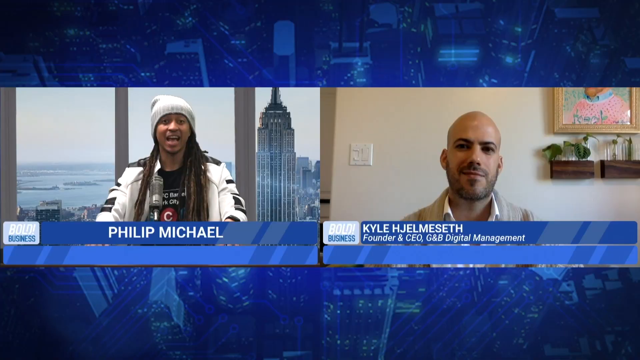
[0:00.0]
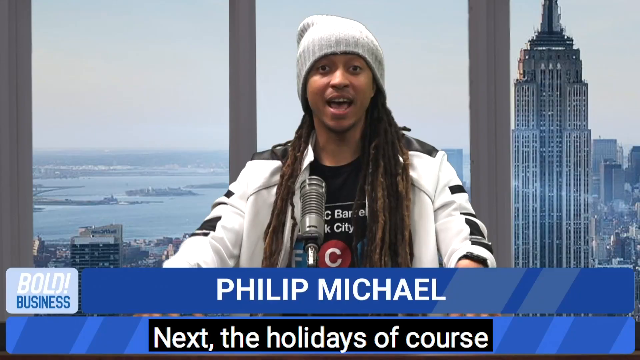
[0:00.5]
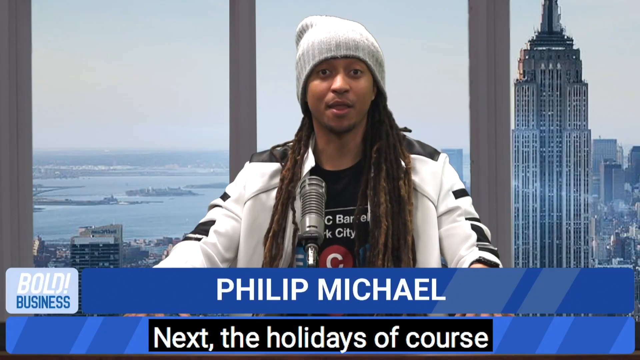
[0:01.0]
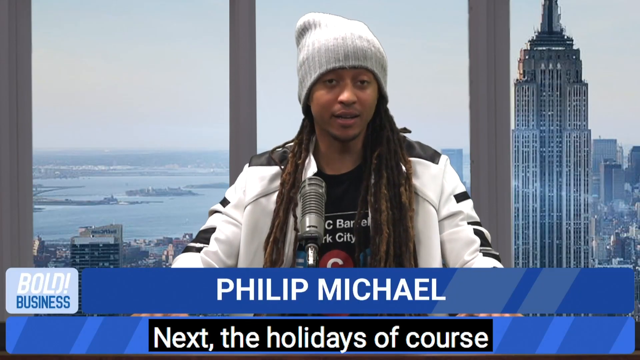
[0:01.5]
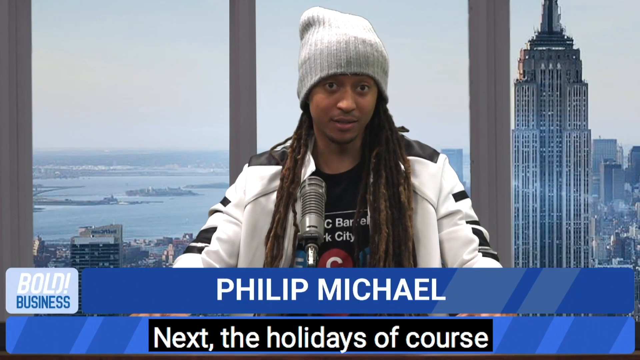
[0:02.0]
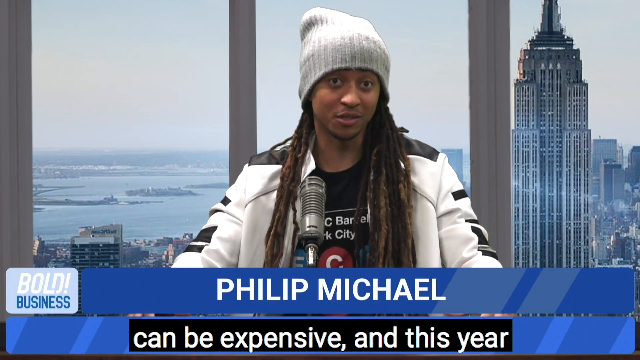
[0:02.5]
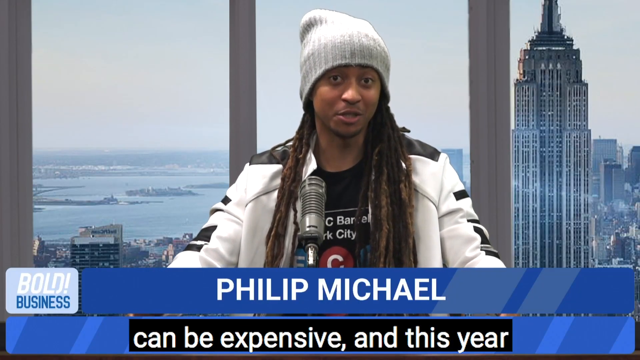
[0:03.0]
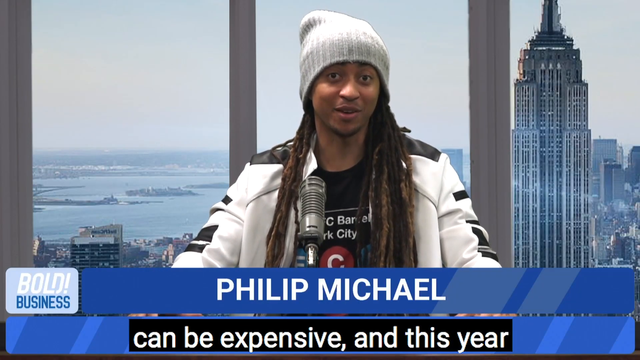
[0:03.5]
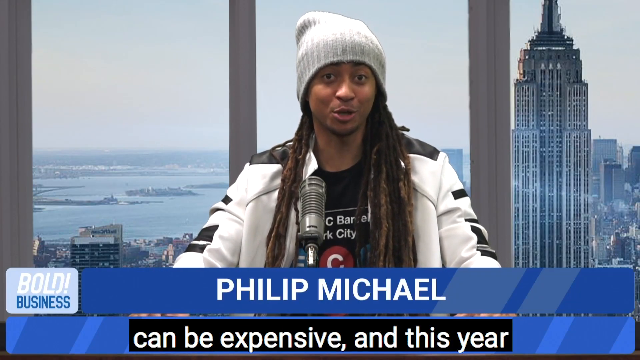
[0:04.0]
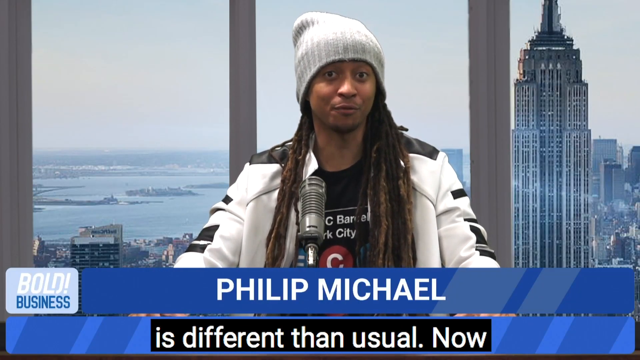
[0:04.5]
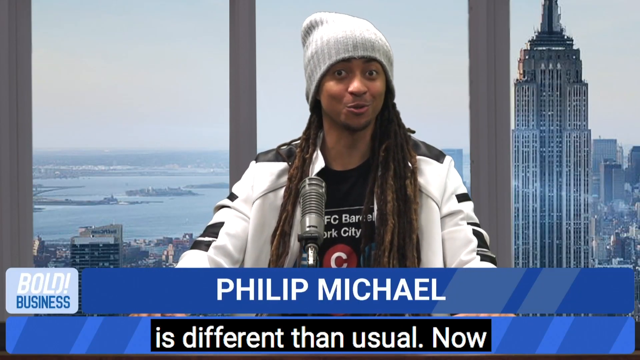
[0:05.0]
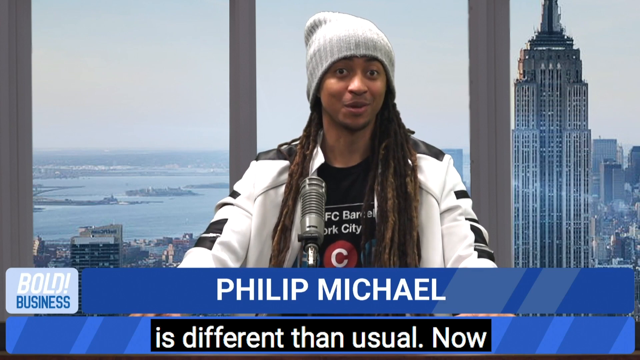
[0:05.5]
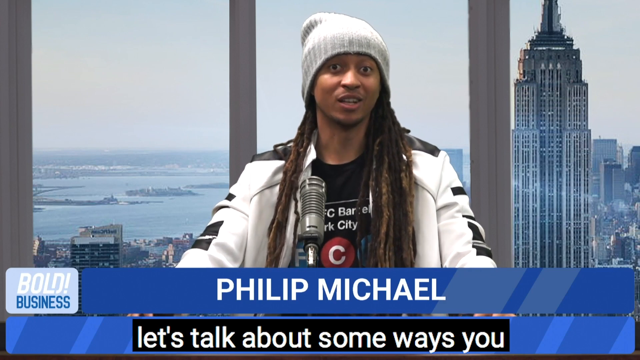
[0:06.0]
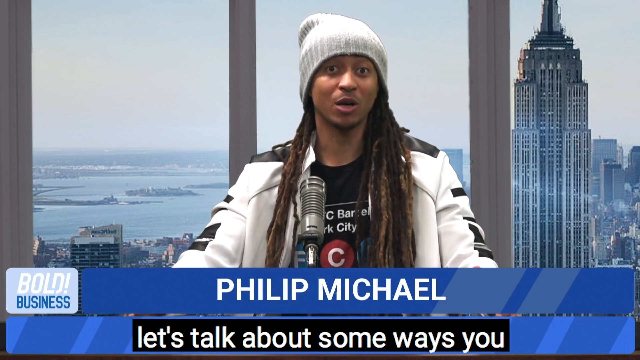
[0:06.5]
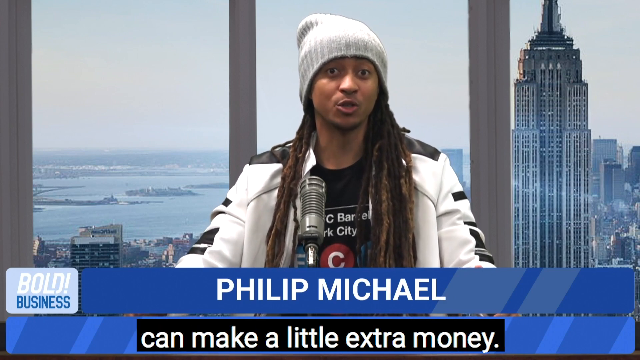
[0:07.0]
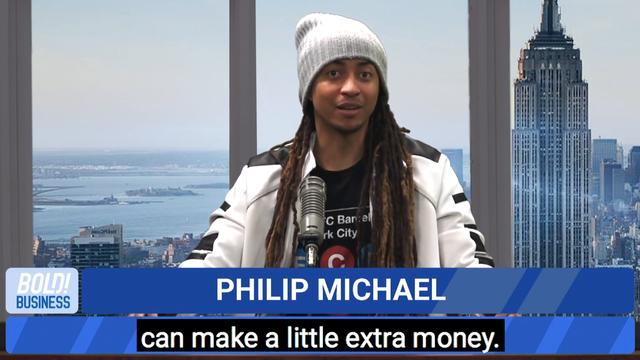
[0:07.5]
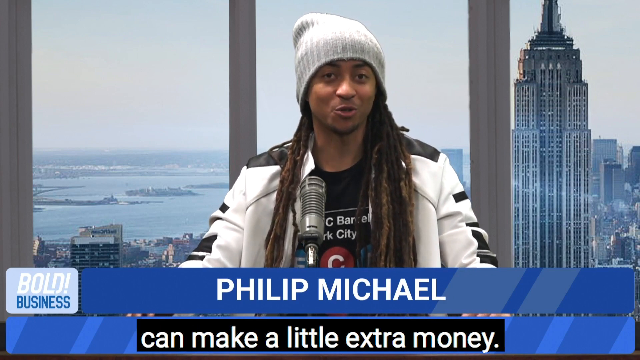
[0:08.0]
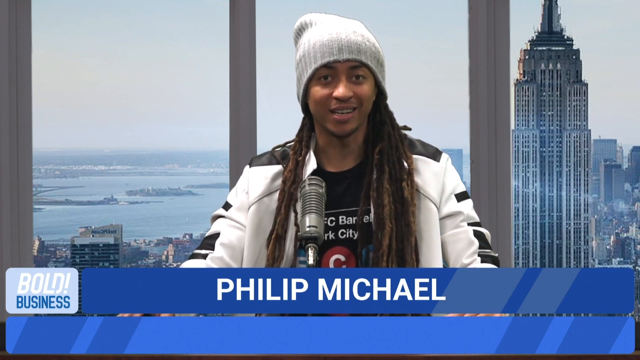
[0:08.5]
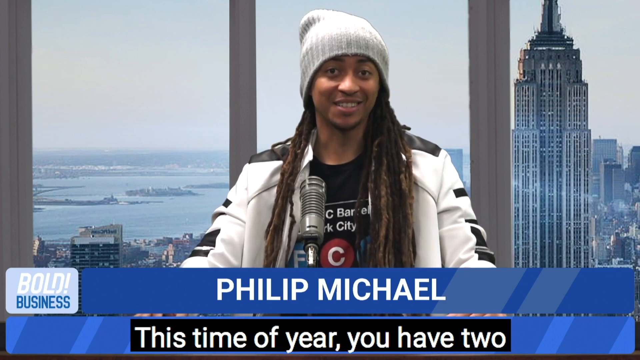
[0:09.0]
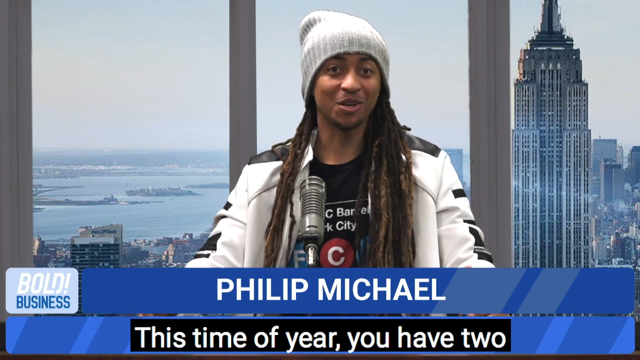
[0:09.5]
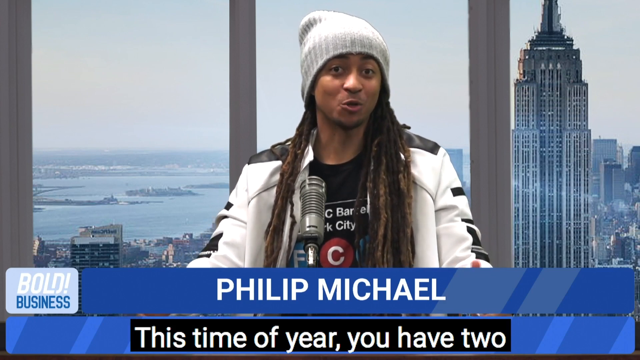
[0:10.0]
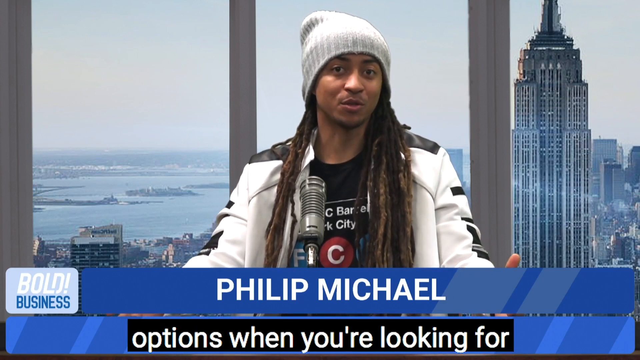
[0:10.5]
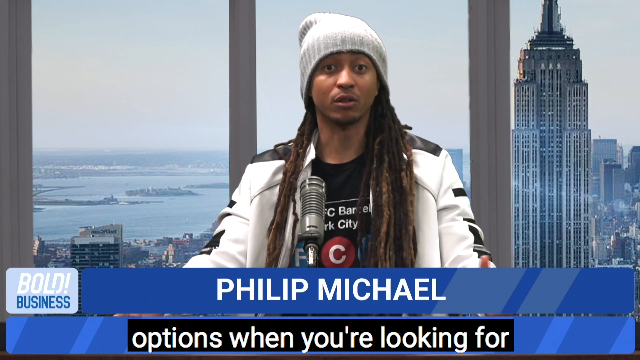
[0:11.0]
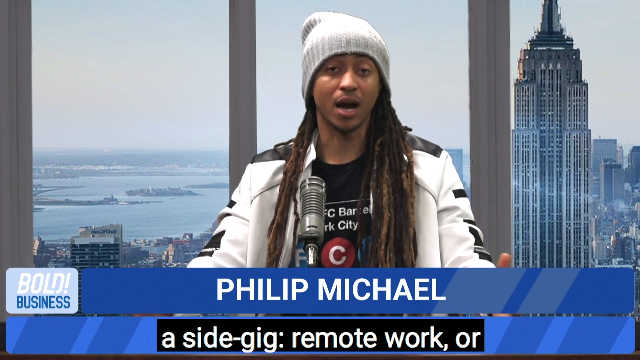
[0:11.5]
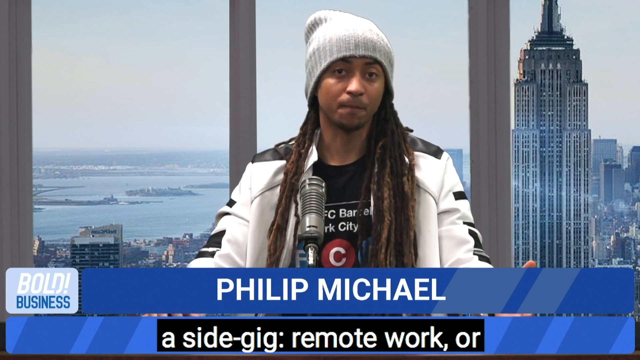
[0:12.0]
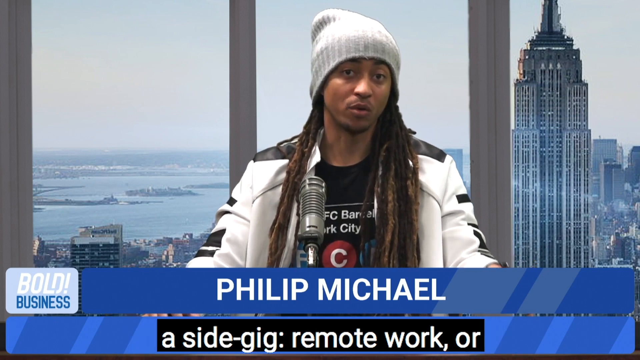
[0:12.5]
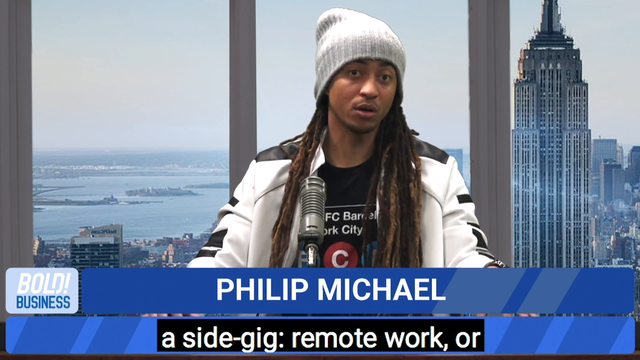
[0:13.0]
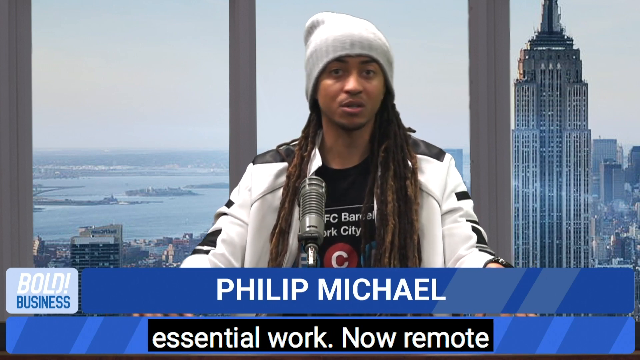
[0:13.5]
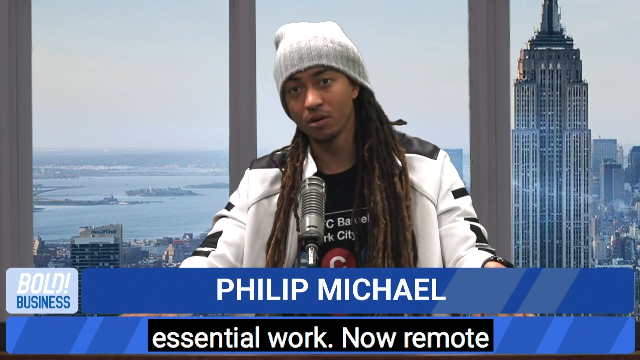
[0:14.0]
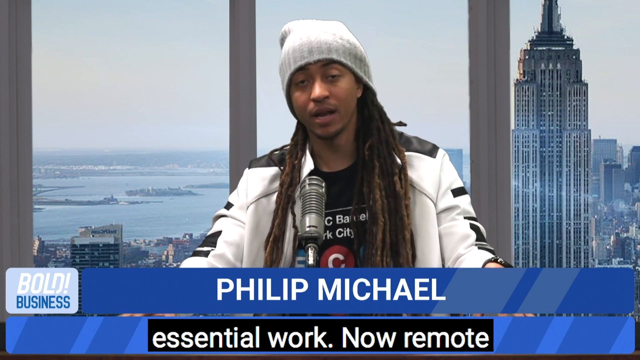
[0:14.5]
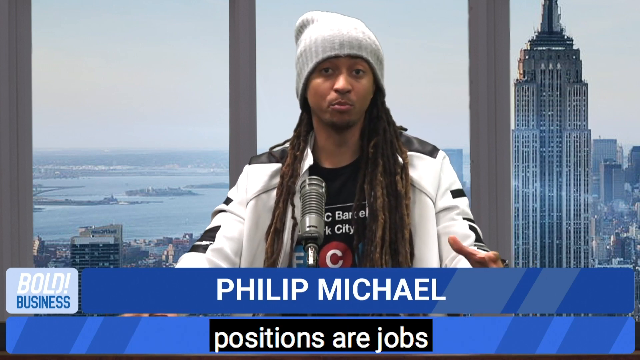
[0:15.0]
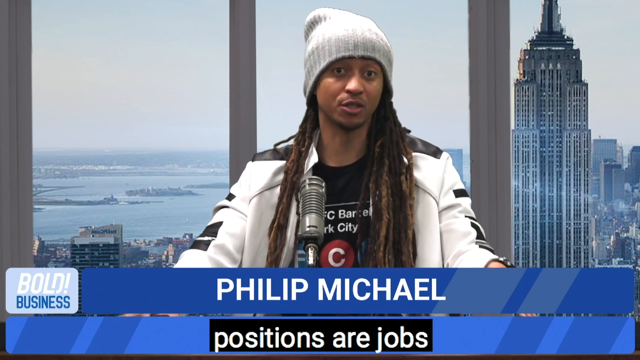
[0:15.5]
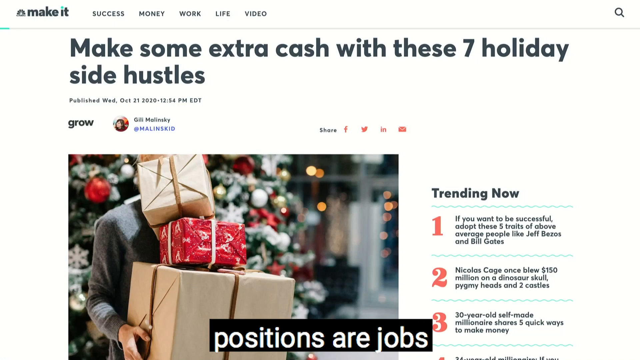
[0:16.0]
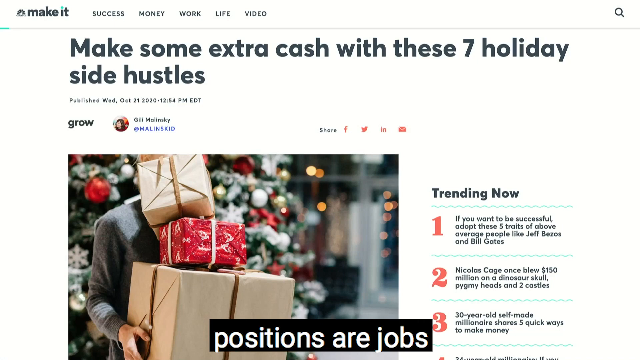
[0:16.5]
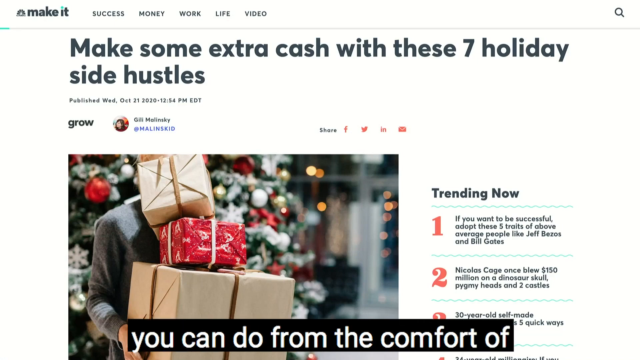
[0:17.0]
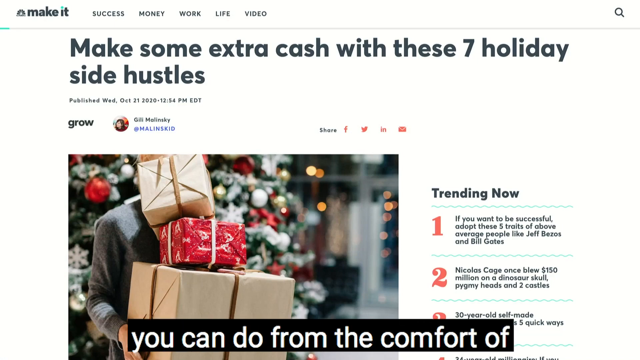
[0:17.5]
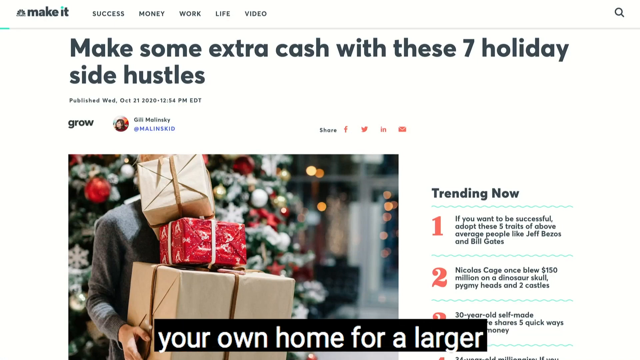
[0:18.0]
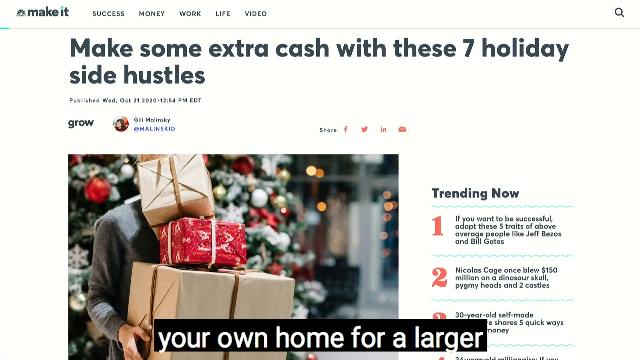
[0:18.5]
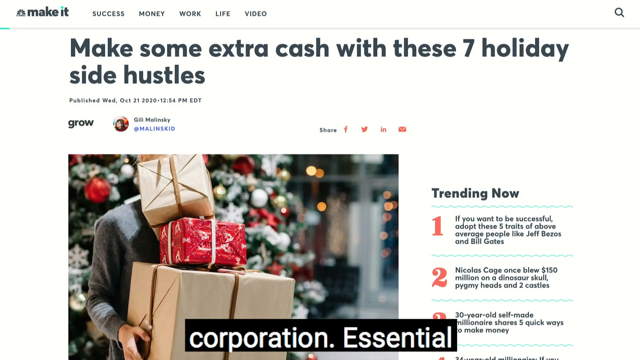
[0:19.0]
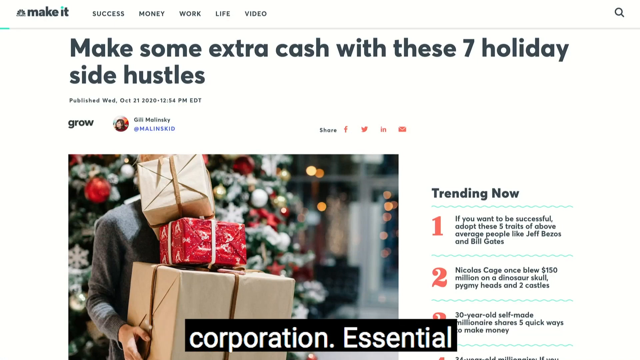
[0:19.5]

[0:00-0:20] What appears to be a live segment, apparently called Bold Business, opens with the words "Bold Business" in the lower left corner. The name "Philip Michael" is written in white across the bottom portion of the screen on a blue rectangular box. Philip Michael is sitting in the middle of the screen, wearing a white skull cap on dreads and a white jacket with black leather detailing, and looks straight at the camera as he presents. Behind him appears to be a green screen meant to look like a very tall building and a large body of water. Another person then appears in a pop-up box on the right side of the video, while Philip Michael is on the left side. The person in the pop-up box seems to be sitting in their home, with a wall behind them, a light switch on the wall, and a picture on the wall. The video then shows only Philip Michael, who smiles, looks at his audience, gestures with his hands and moves his eyebrows up and down. The screen then changes to content about making some extra income.